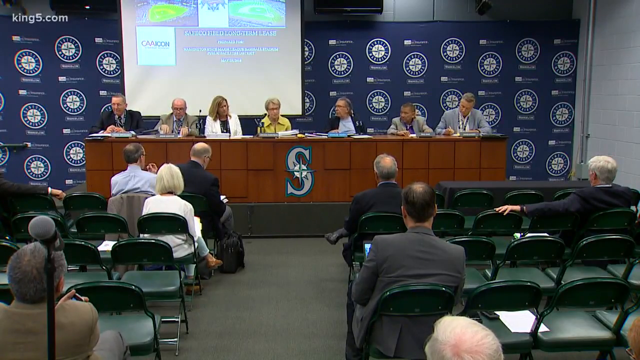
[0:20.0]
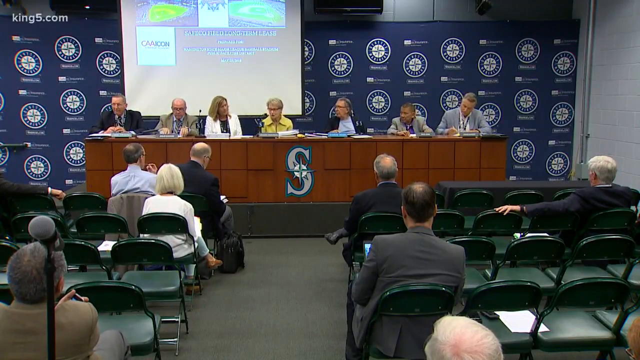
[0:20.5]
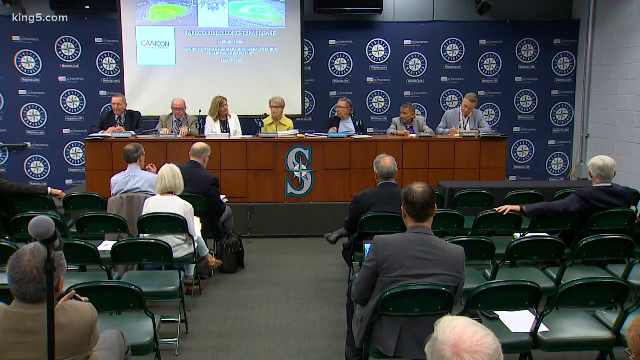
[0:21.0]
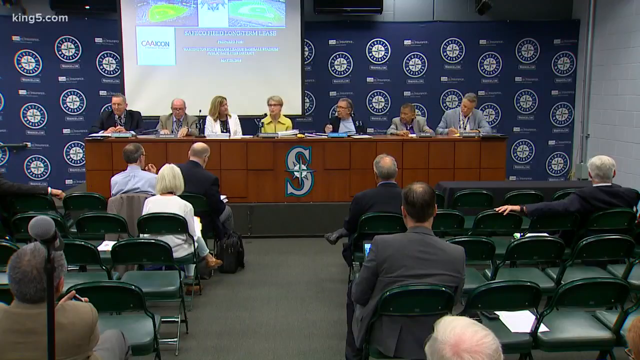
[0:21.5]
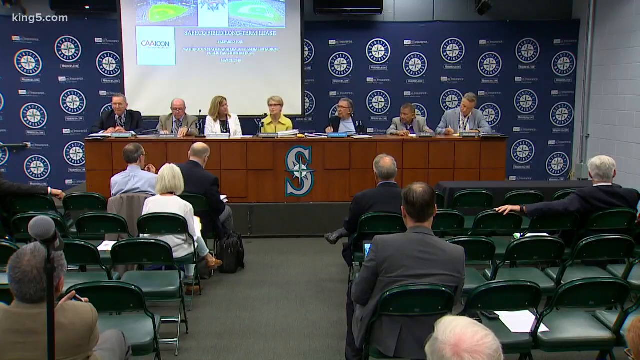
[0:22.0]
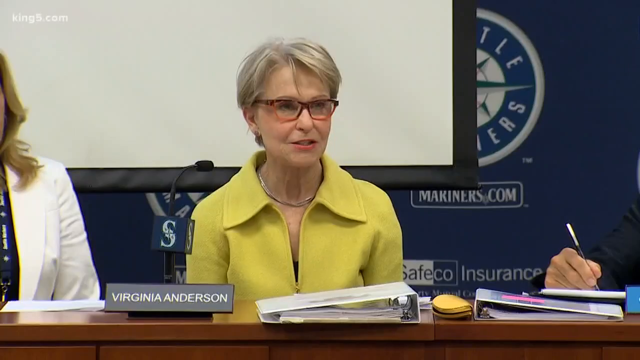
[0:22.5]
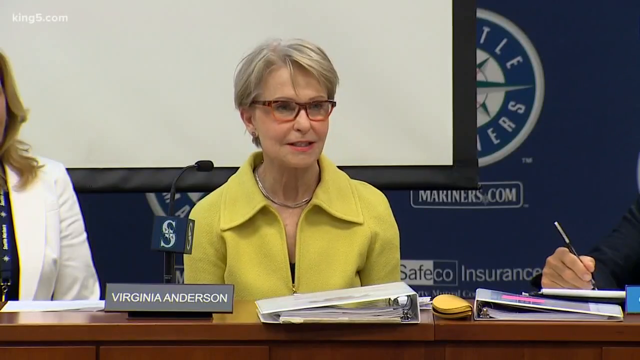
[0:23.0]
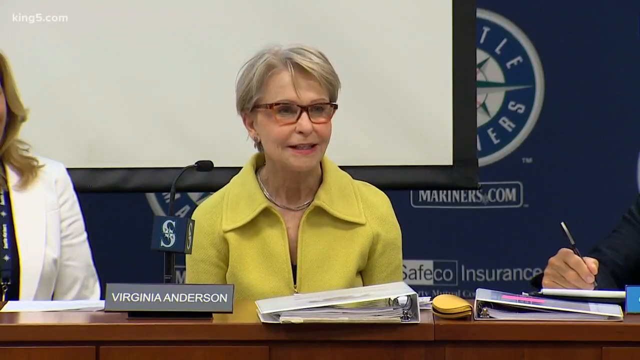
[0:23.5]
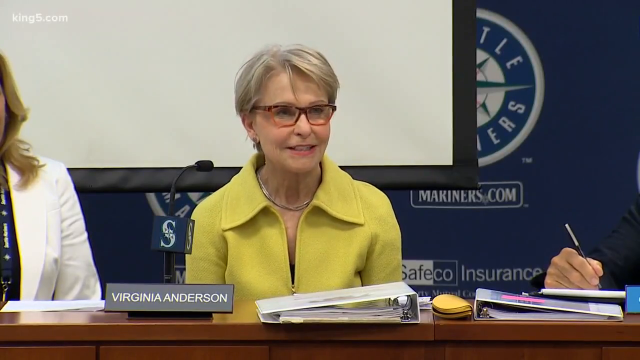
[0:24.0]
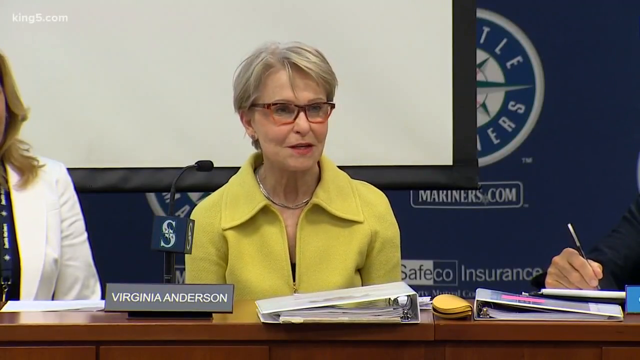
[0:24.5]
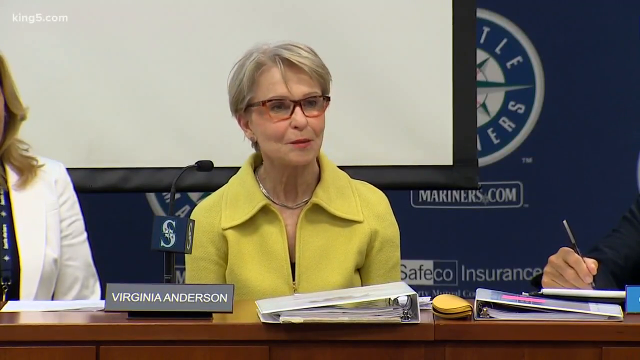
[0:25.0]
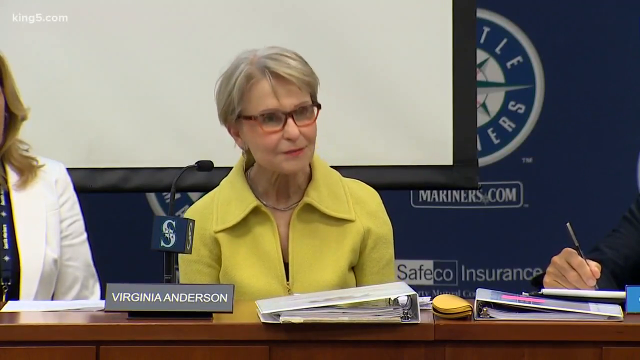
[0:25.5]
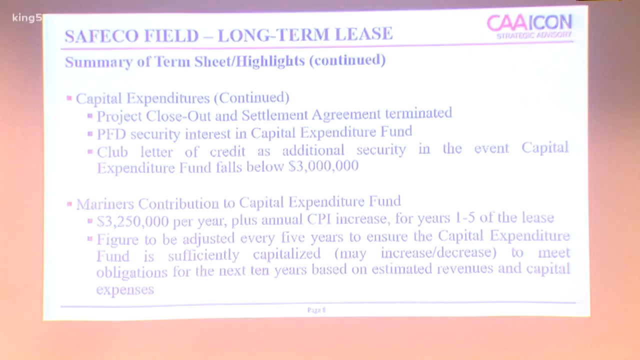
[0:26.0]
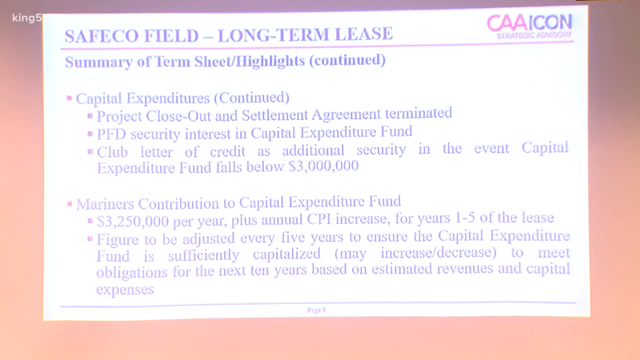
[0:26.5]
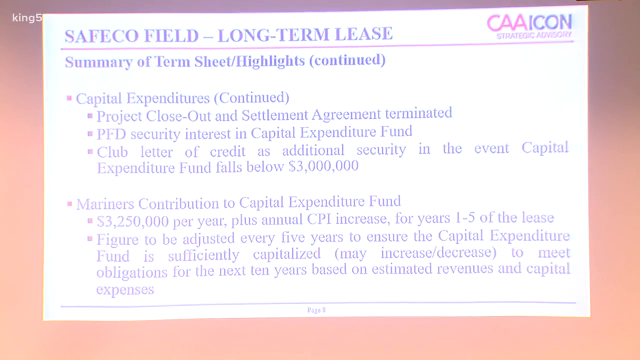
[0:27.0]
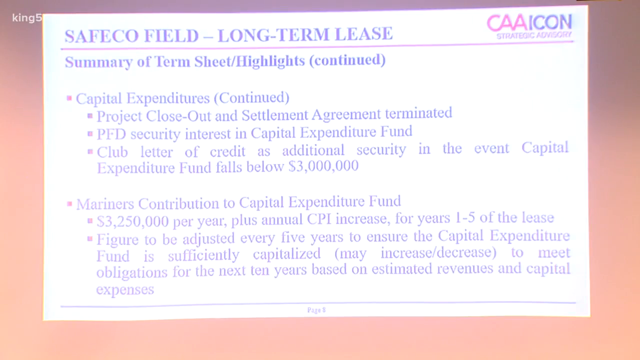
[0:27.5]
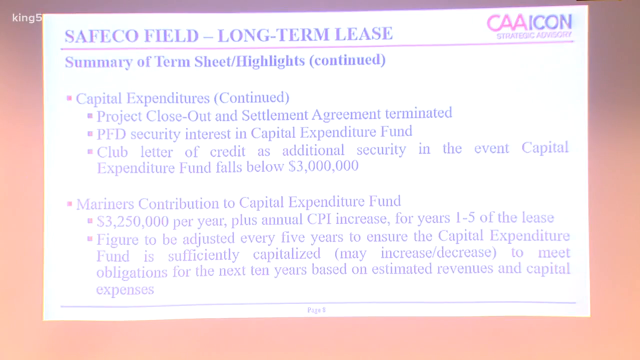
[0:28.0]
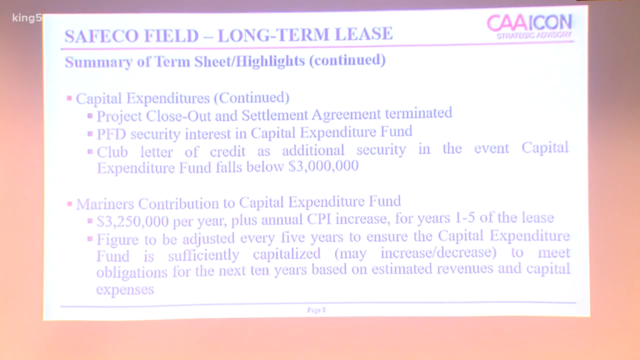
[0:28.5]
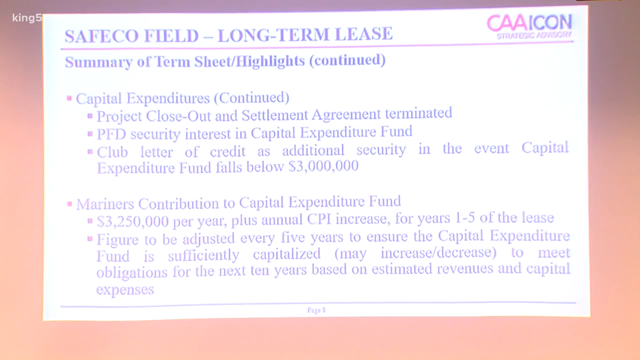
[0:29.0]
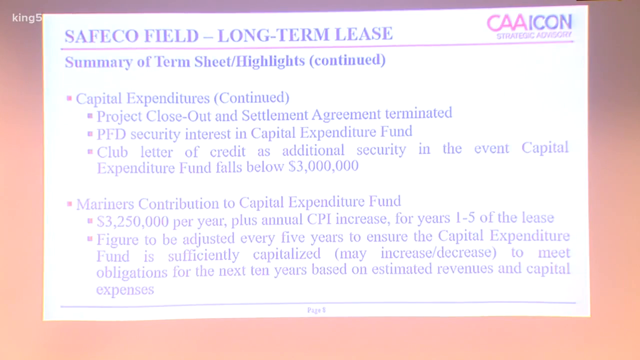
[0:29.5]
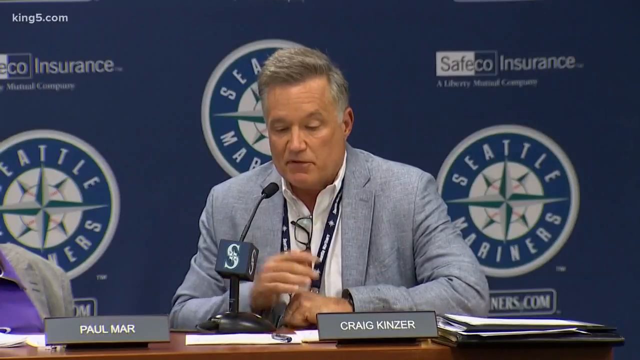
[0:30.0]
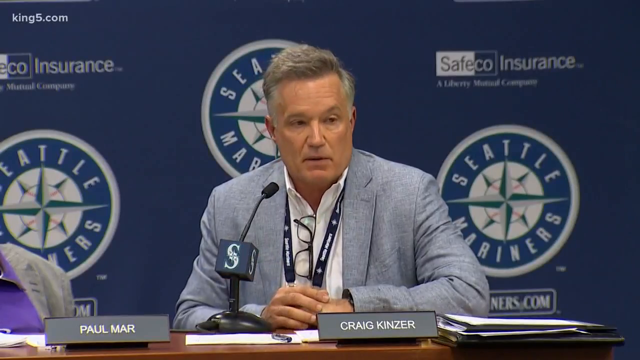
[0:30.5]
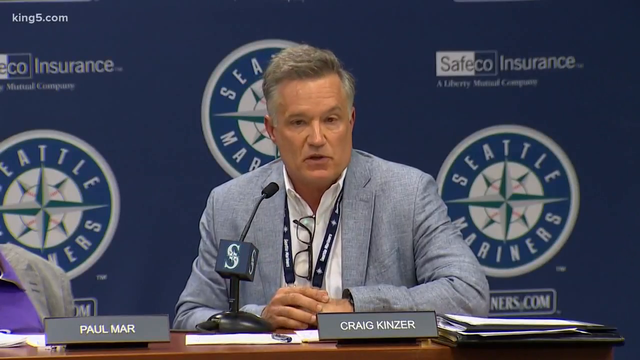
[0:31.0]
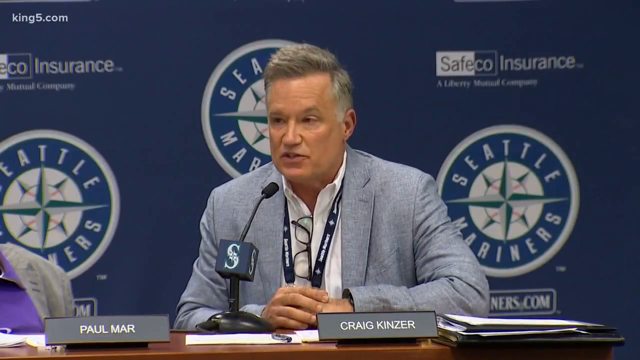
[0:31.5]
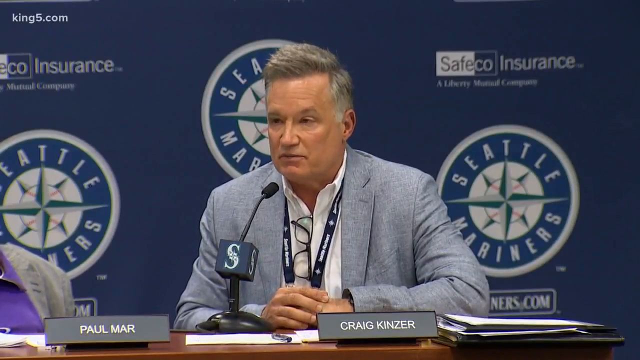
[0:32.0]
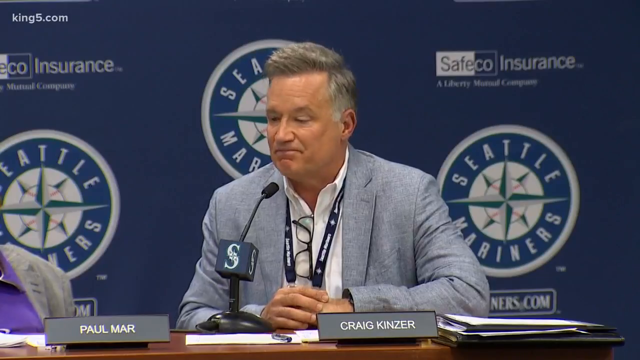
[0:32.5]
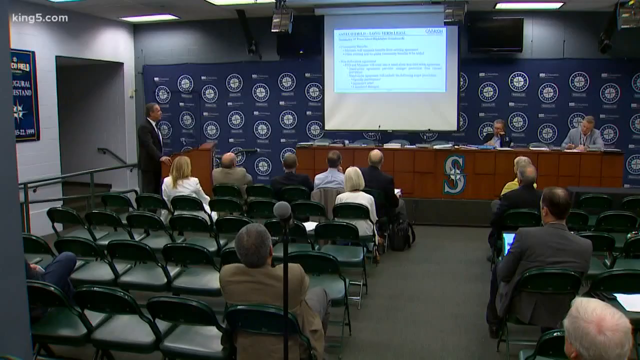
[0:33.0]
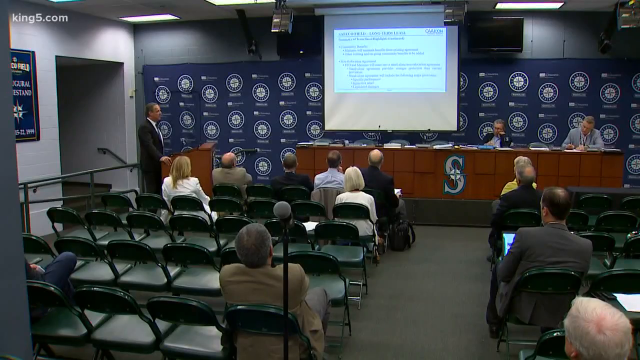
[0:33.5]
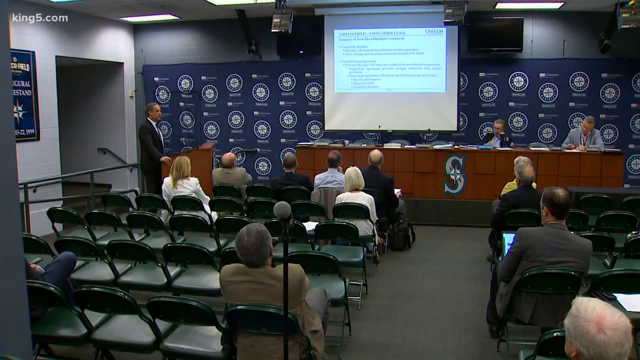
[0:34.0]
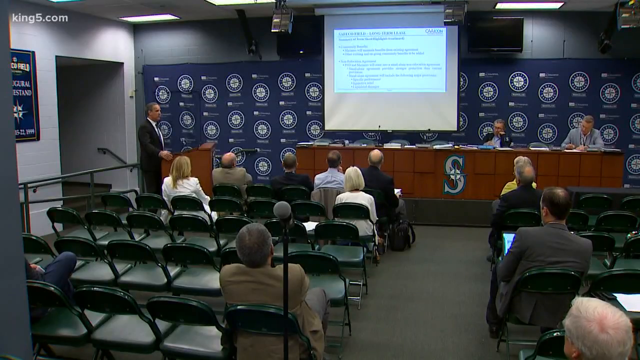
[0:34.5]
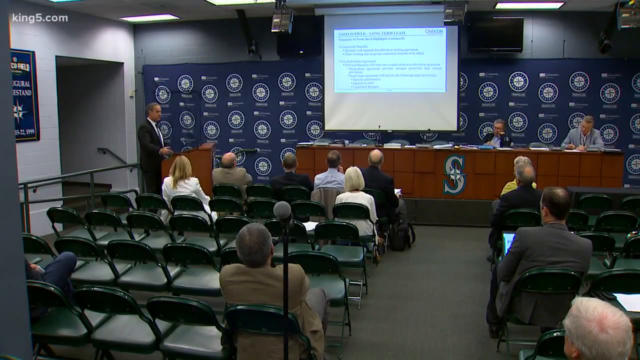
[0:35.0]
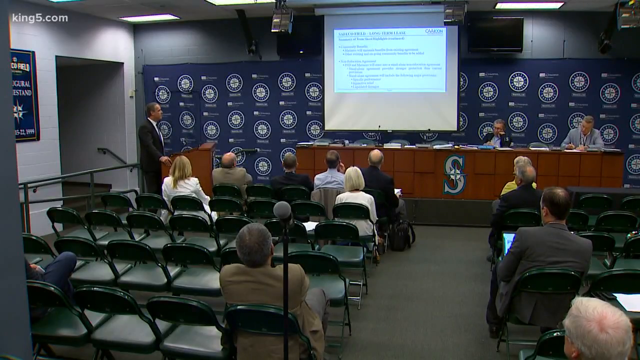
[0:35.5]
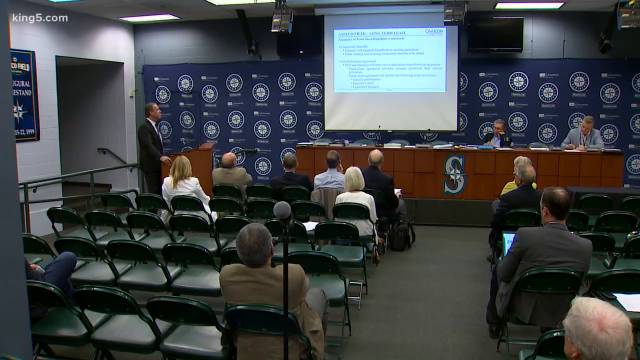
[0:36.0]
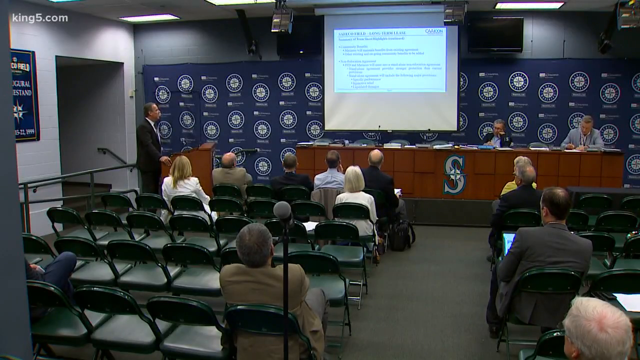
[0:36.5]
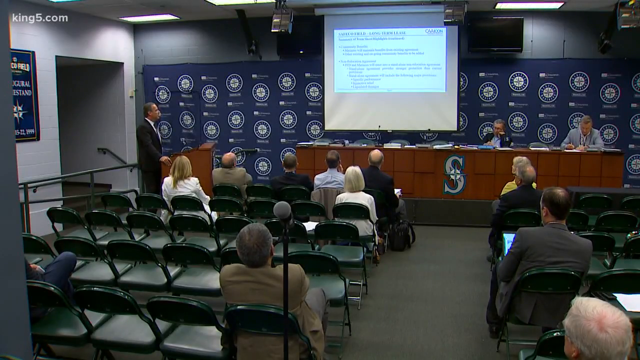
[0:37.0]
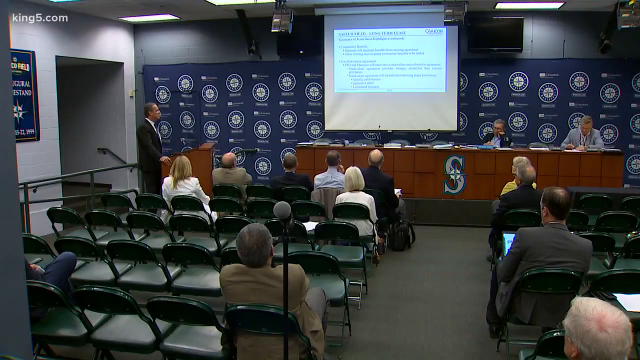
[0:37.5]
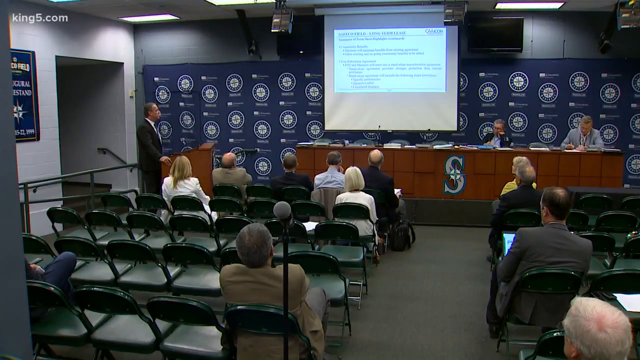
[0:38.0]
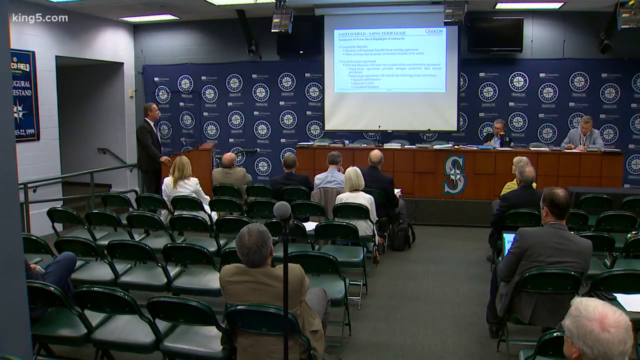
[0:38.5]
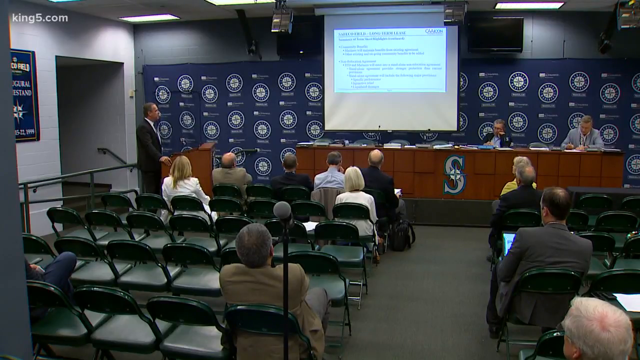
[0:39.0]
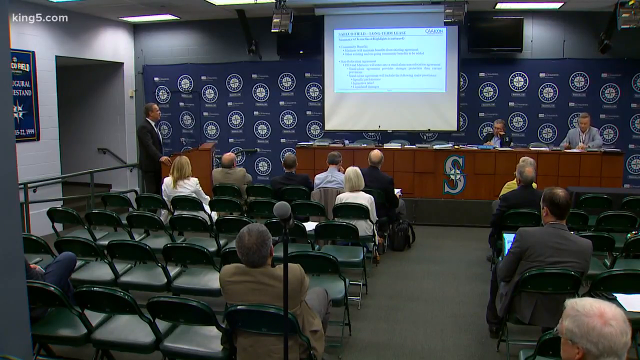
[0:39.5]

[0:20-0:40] The conference continues. Behind the participants is a blue screen with circles all over it and text at the bottom, and there is a very long wooden desk with seven people spread across it, each with papers and other items in front of them and microphones. They are all dressed professionally. A screen behind them has an image cast on it. A number of green folding chairs are set out, but there seem to be only seven or eight people in the crowd, who also appear to be dressed professionally. The chairs are split in two with a row in the middle. The camera zooms in to Virginia Anderson, who looks like she is in her 60s or 70s. A document then appears on the screen reading "Safeco Field long-term lease, summary of term sheet highlights continued." It is broken into two bullet points, "capital expenditures continued" and "Mariner's contribution to capital expenditure fund," each with several bullet points under it. The shot switches to a man named Craig Kinezer, who is talking, and then the angle changes to show a man from the crowd standing up and talking.